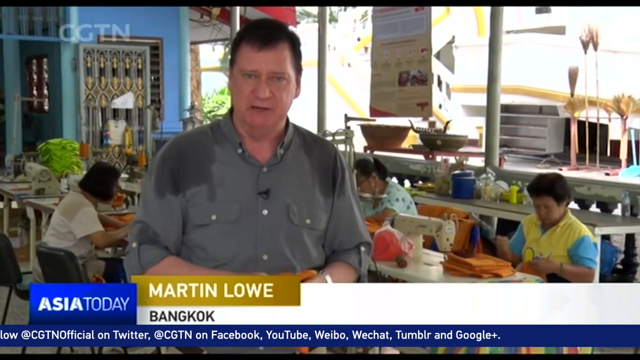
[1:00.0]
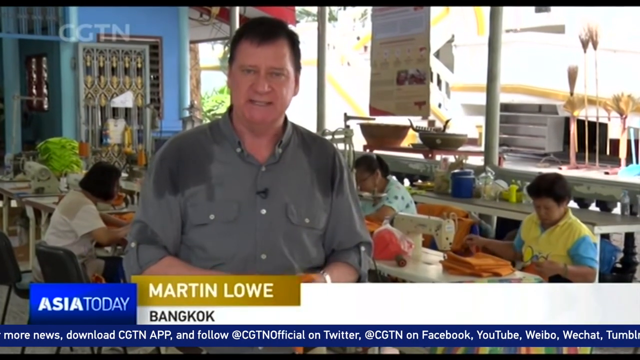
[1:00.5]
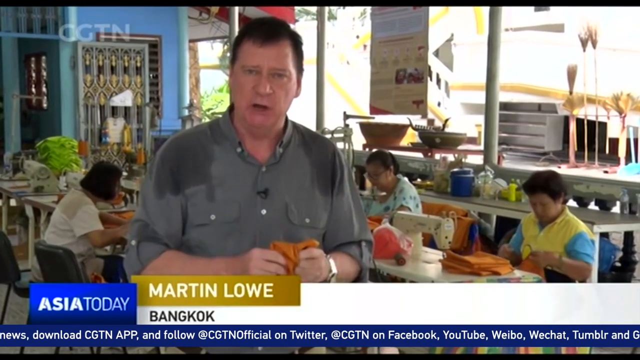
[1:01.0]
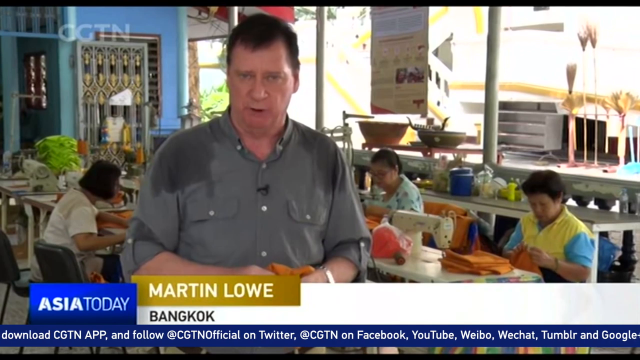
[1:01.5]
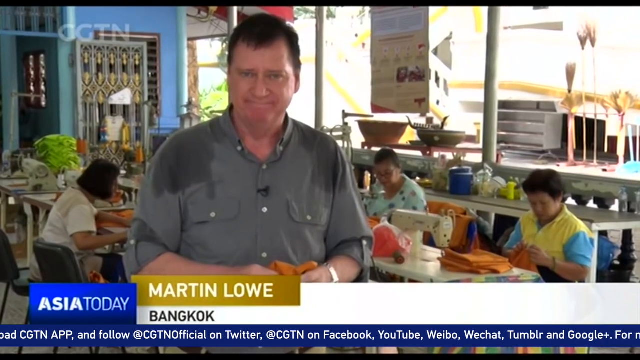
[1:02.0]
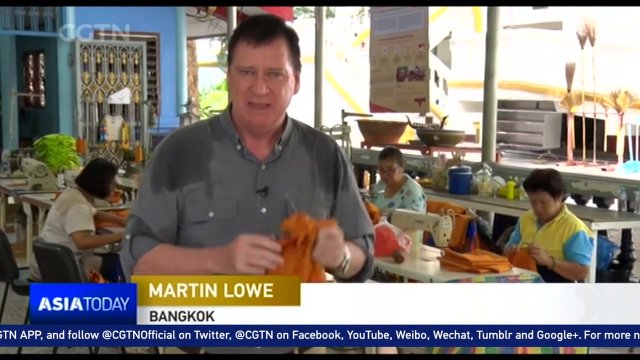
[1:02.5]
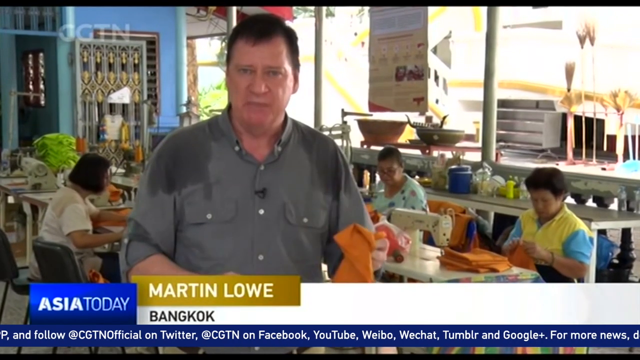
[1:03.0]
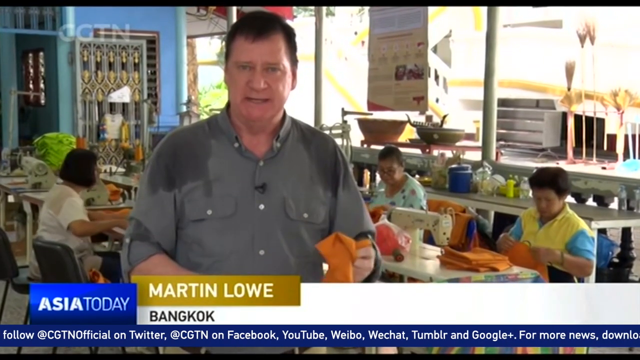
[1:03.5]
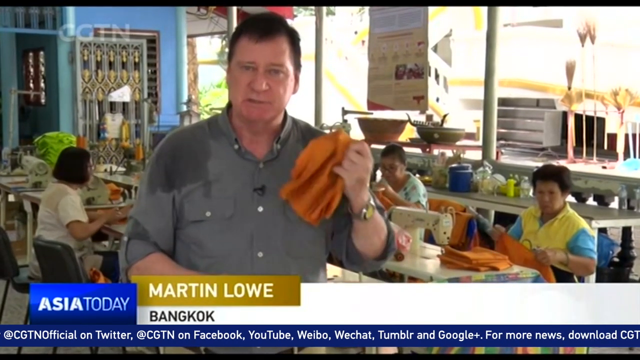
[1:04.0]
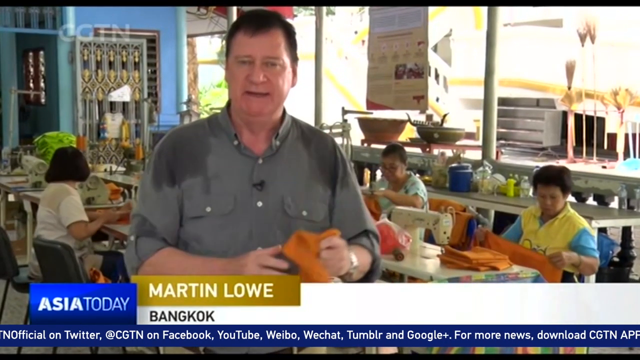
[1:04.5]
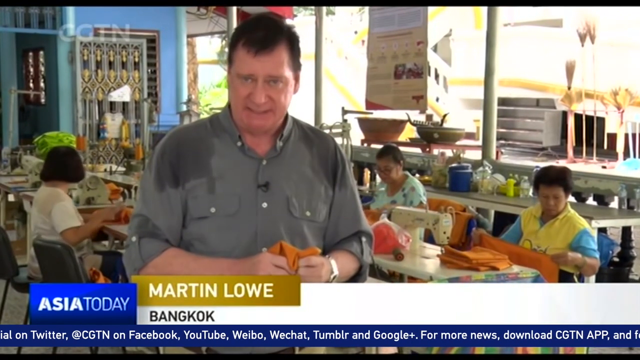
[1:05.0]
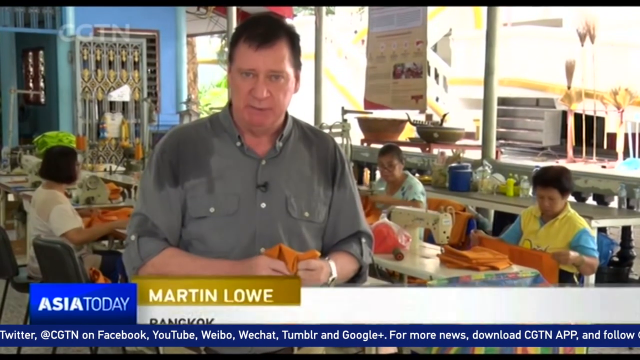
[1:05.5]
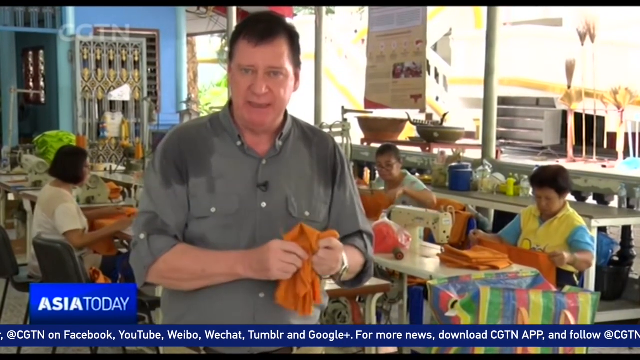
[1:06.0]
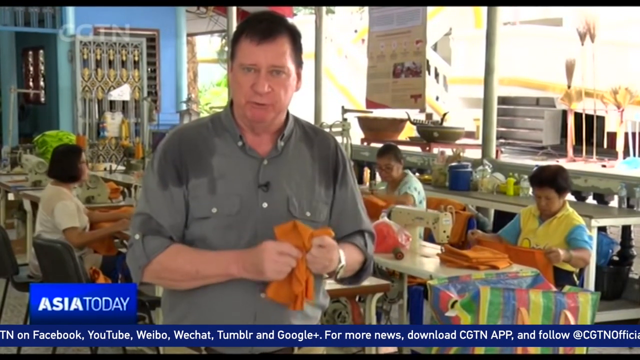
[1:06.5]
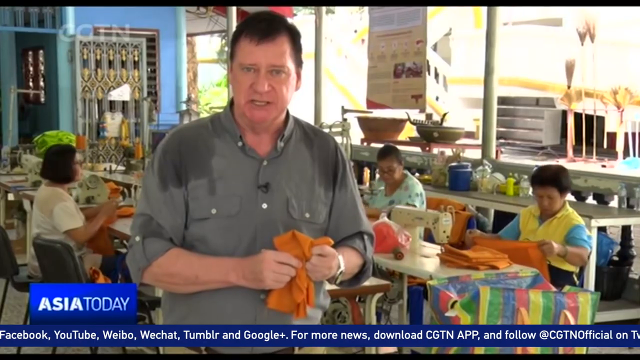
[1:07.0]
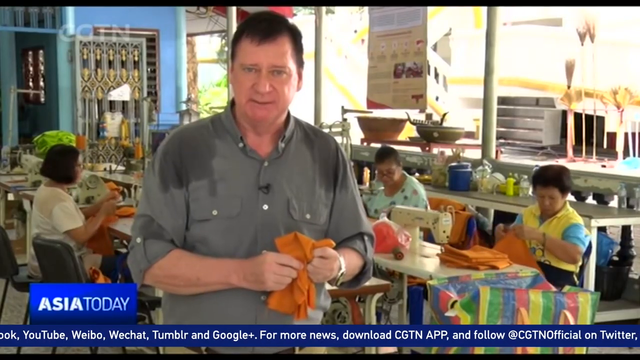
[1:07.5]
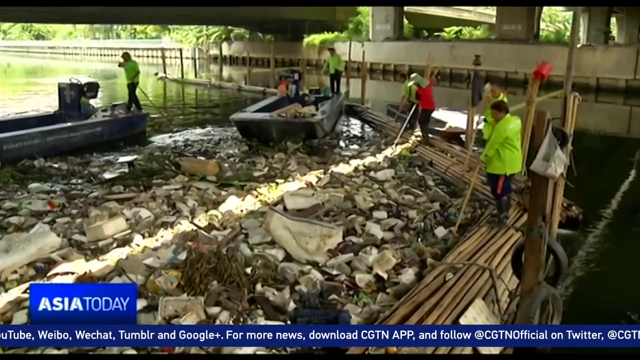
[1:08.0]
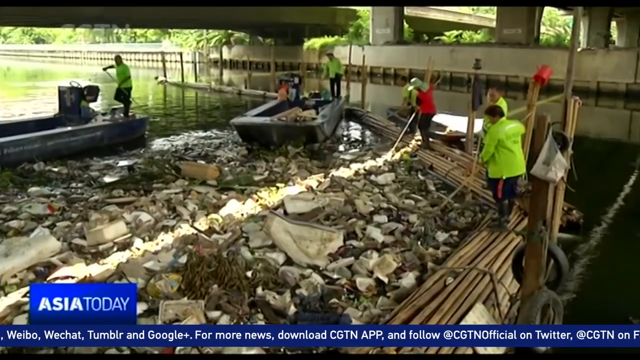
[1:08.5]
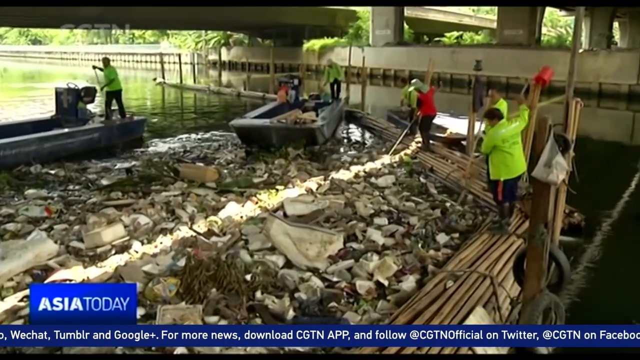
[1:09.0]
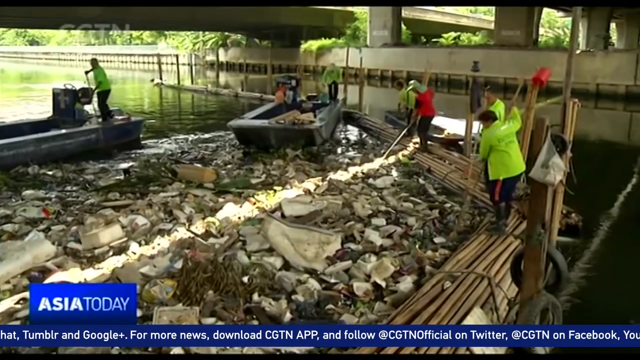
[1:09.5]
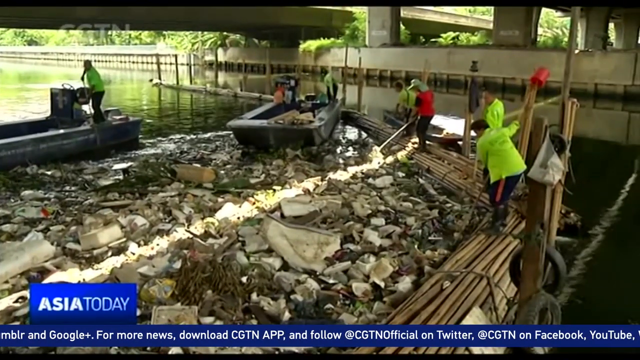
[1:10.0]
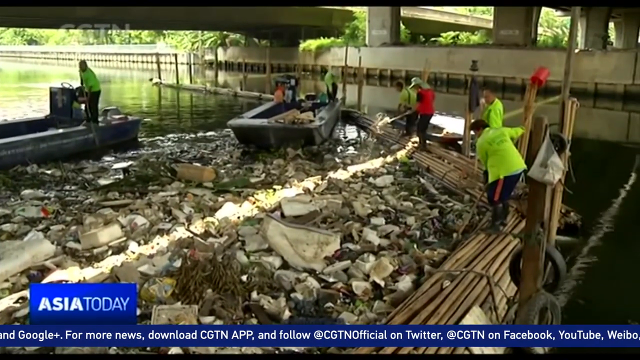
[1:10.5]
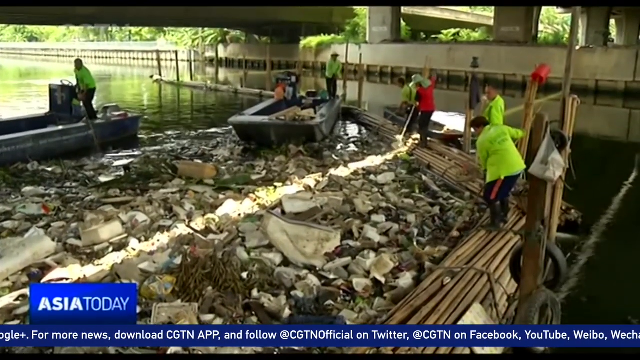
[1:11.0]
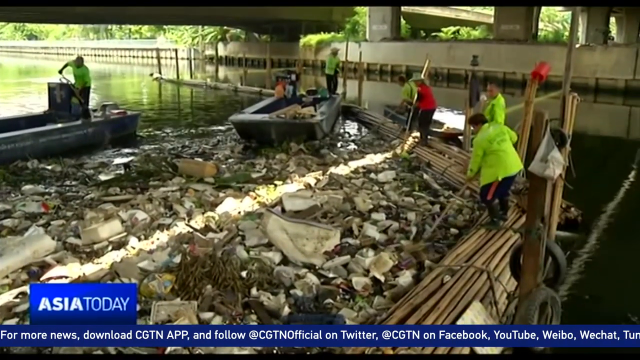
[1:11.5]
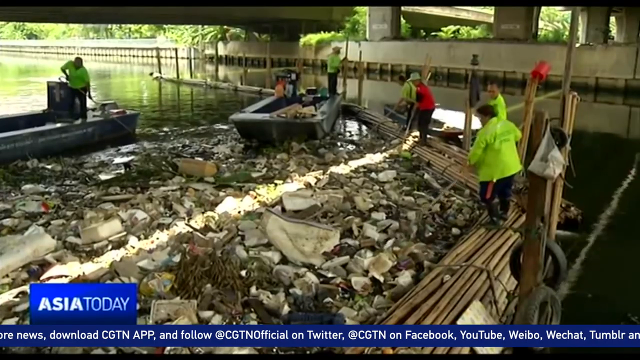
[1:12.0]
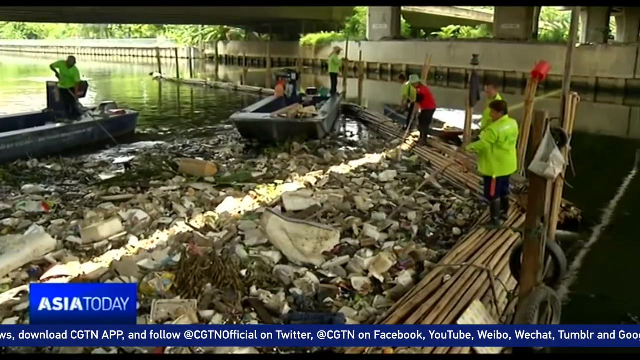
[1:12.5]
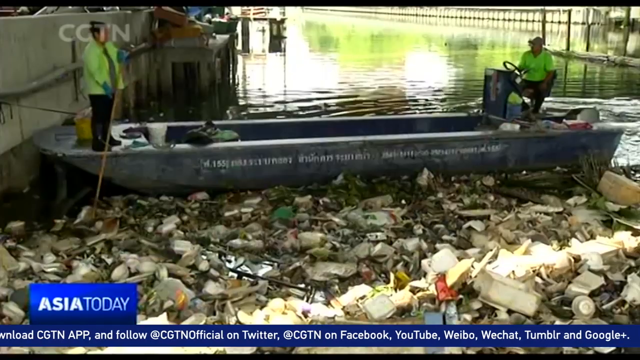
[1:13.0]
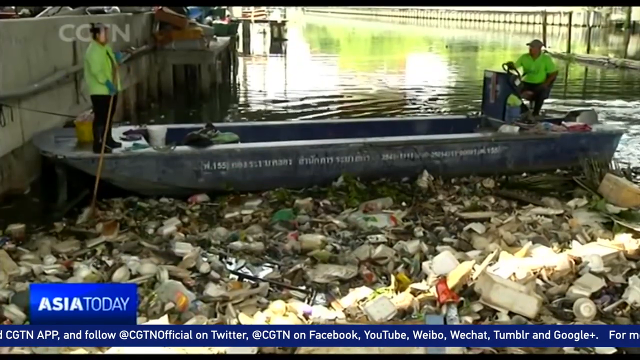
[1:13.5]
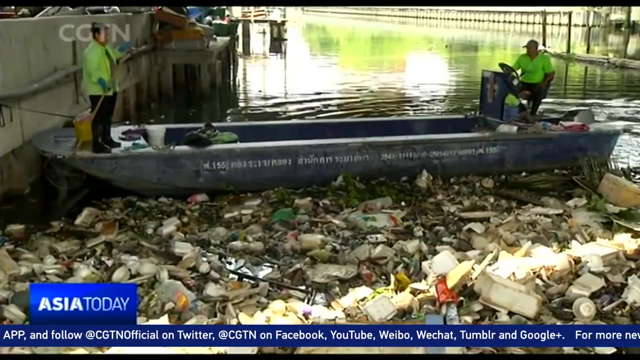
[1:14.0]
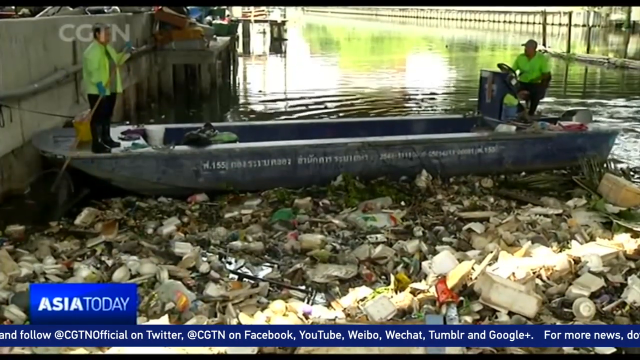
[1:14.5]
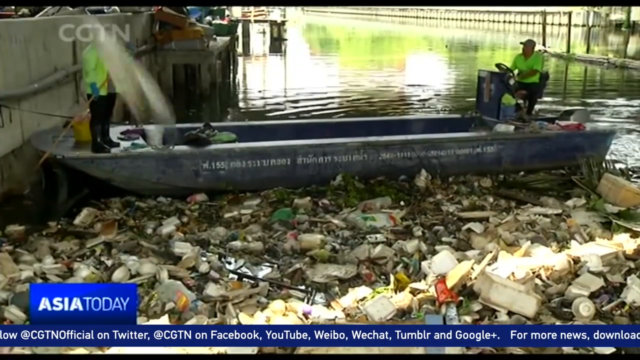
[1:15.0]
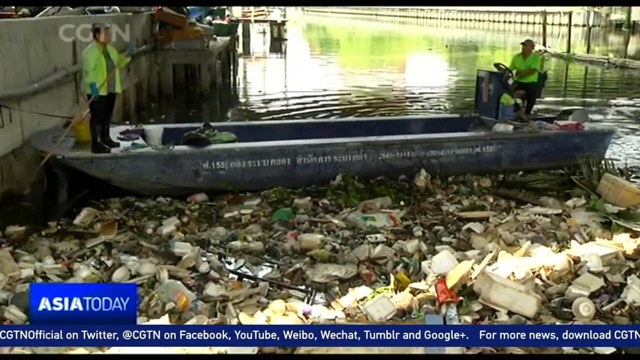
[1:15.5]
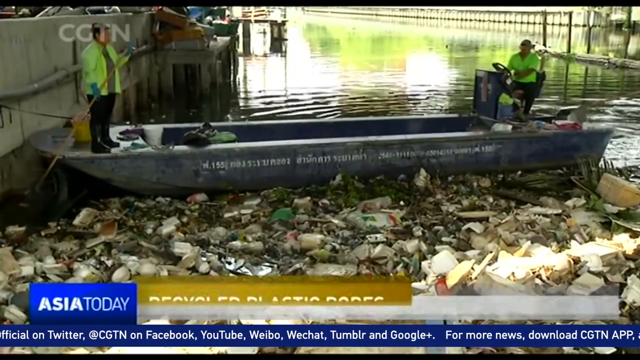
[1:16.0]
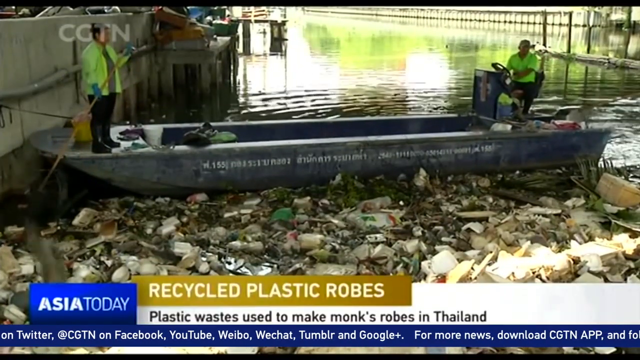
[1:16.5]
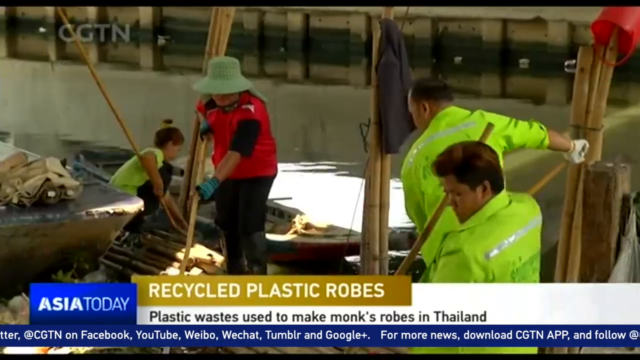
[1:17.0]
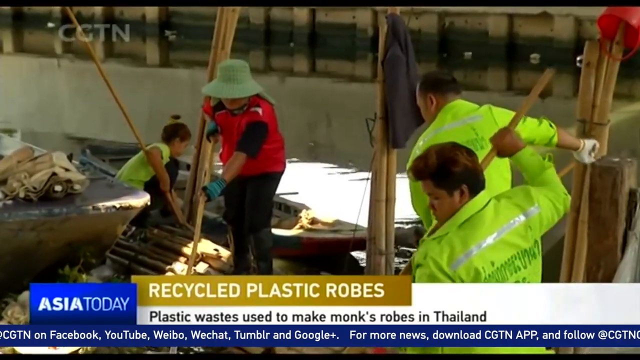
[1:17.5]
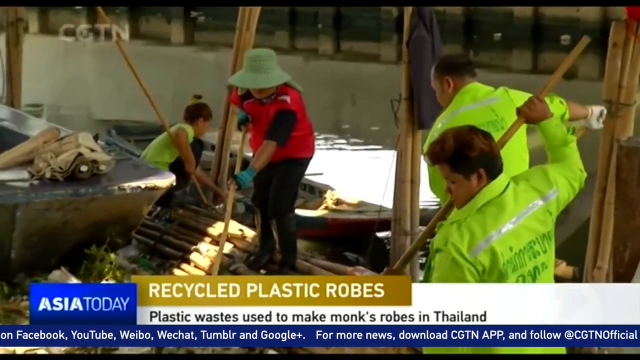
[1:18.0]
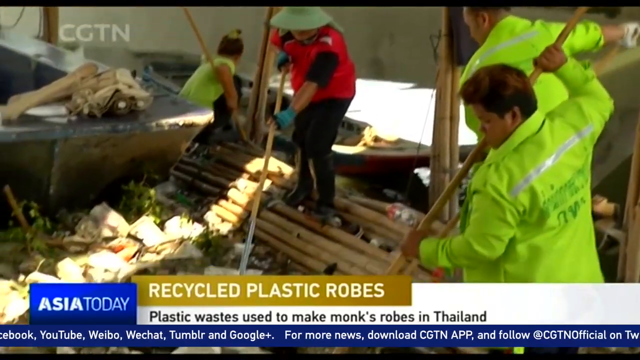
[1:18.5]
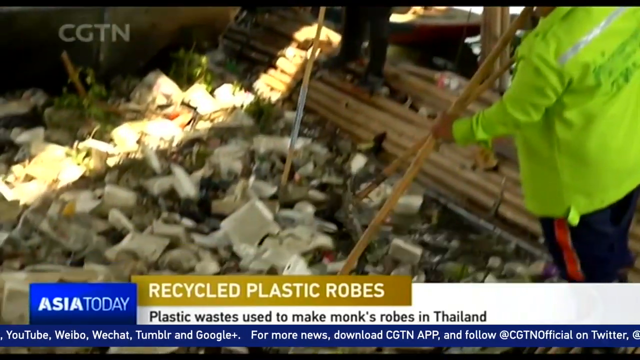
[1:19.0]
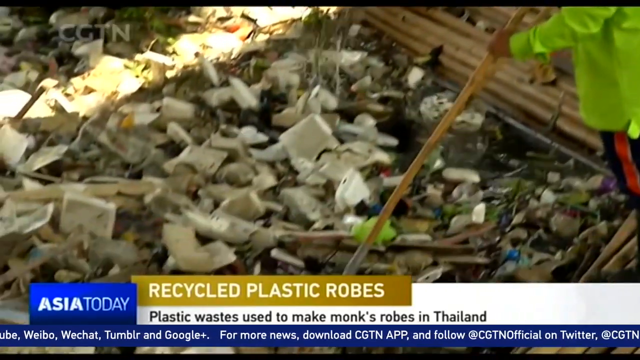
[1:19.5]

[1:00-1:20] "Asia today" is written on the left side as Martin talks, facing the camera with his eyes on it, and lifts one of his hands, which wears a watch. His shirt looks slightly wet. The scene moves to what looks like a river, where men in green jackets with sticks appear to be cleaning it. Something that looks like a stationary boat is there, and a lot of plastic lies around the river; it looks like waste flowing into the river, which is heavily contaminated. A wall runs around the river where they are cleaning the plastic, and many plastic containers have been gathered on the side of the river.